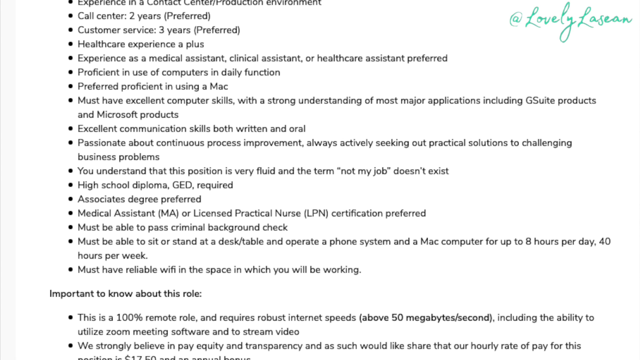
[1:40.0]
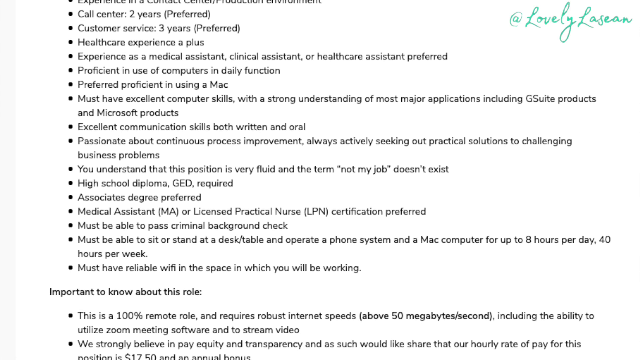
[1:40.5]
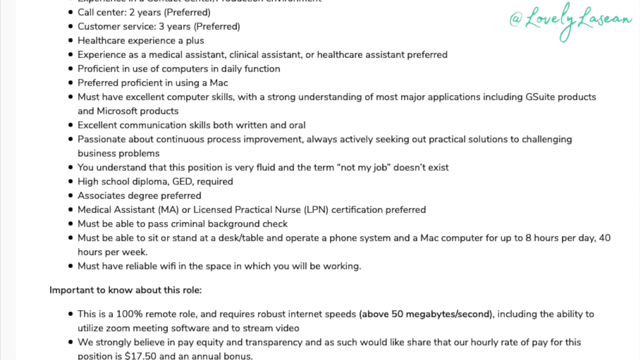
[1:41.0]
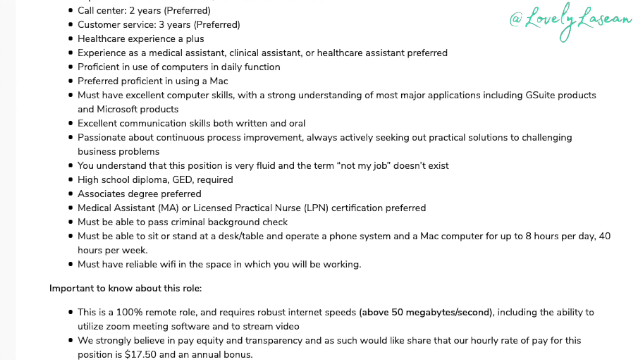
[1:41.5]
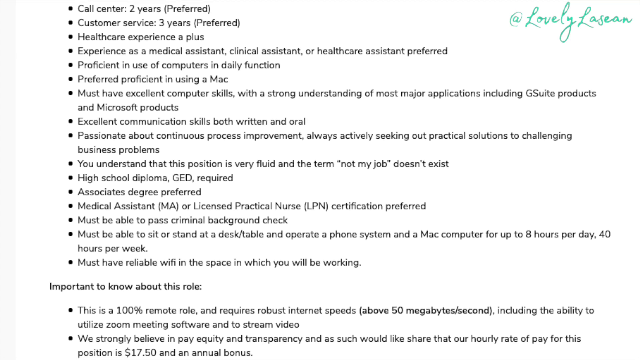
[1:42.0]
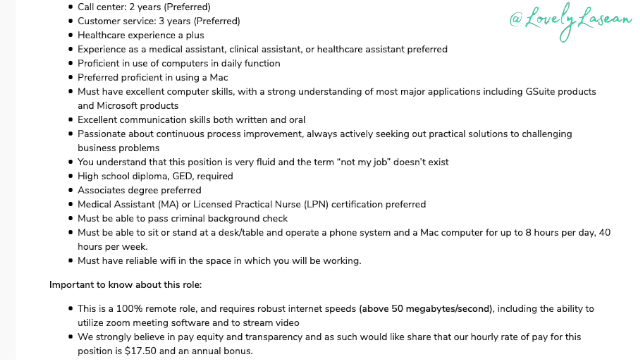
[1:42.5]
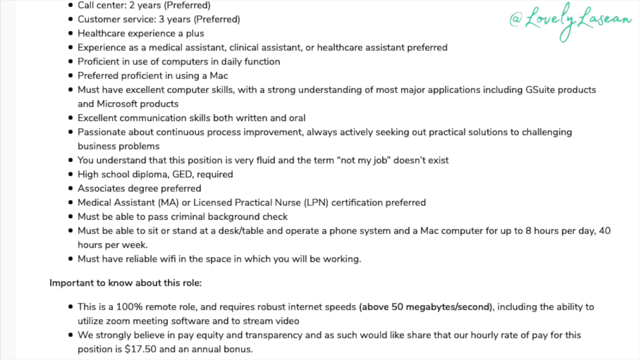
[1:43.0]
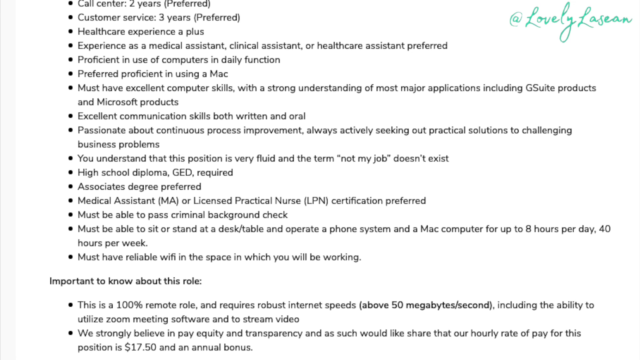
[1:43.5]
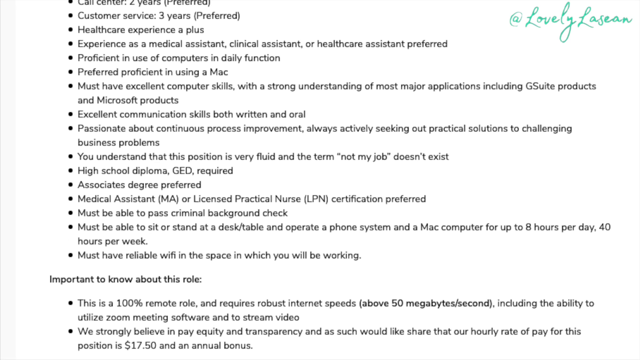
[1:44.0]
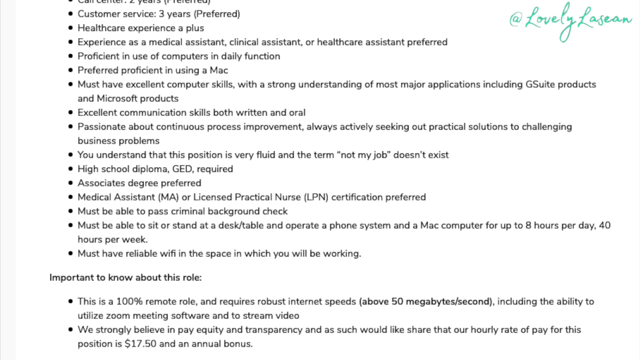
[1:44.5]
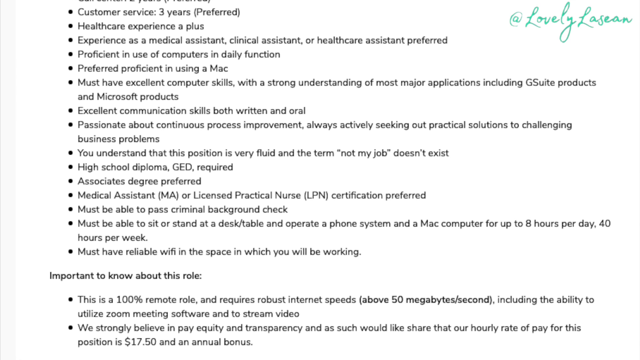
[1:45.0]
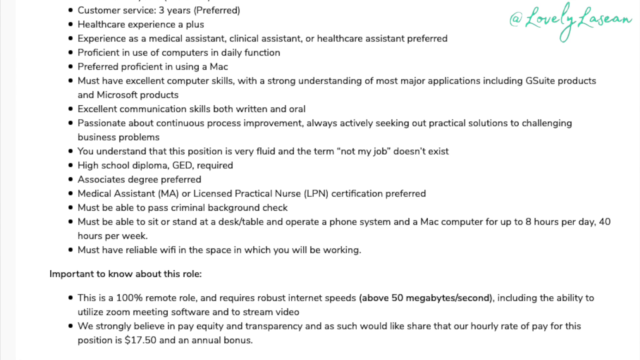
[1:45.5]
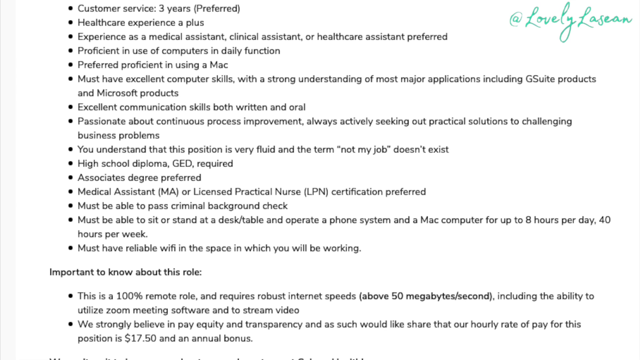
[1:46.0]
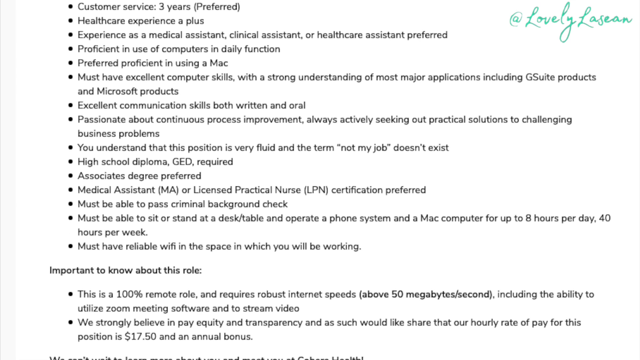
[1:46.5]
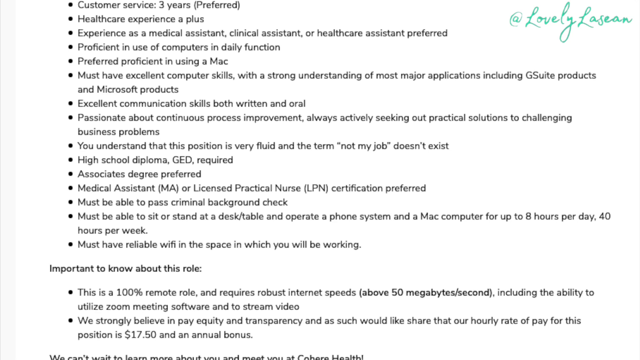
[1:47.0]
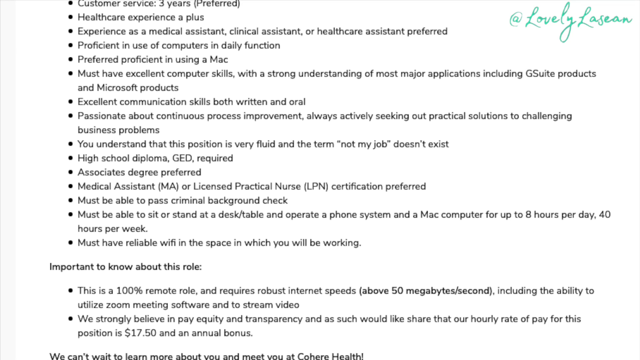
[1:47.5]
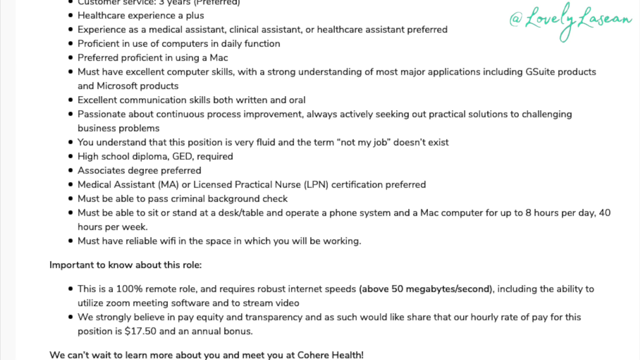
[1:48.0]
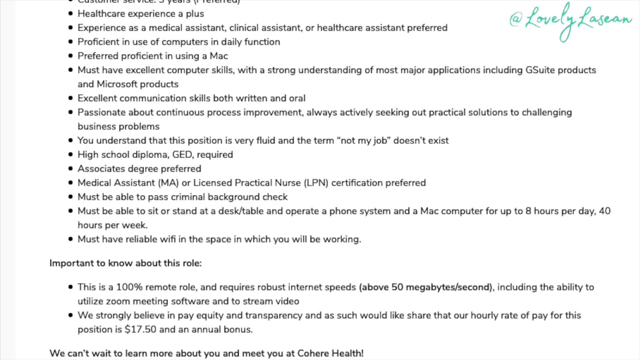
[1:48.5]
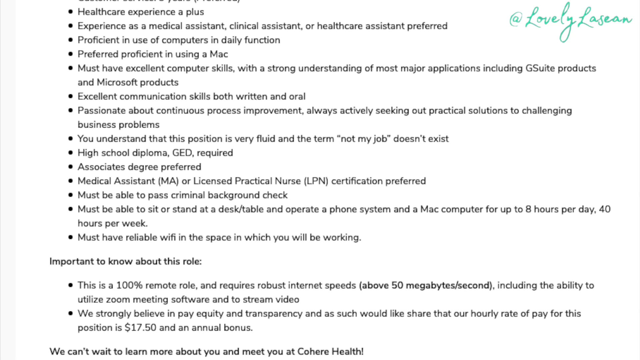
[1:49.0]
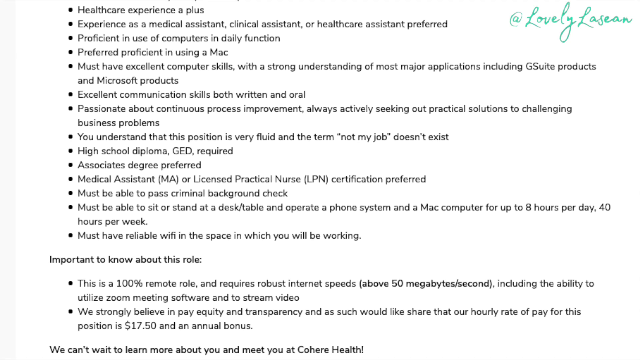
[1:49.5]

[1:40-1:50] A woman in three different dresses, with long brown hair, appears against a white background with green flowers at her side. She is advertising a skincare product, holding it; the product is for Cohere. A page with the Cohere website follows, mentioning in-tech specialists, apparently a search for a specialist to join the company. On the left side there is a button reading "apply here", highlighted in red, apparently for applying for the specialist position. The next page says "what will you do" and lists the things the specialist will do, followed by a section reading "your competencies" that lists the competencies expected of the applicant.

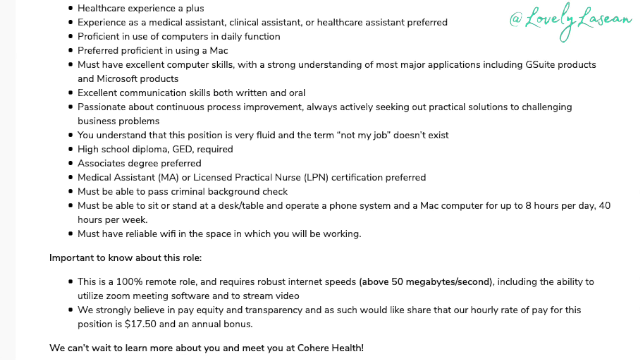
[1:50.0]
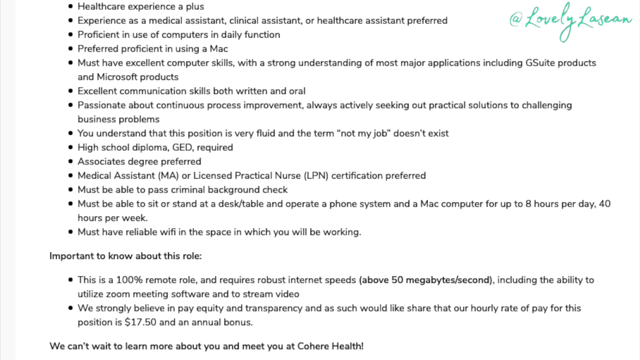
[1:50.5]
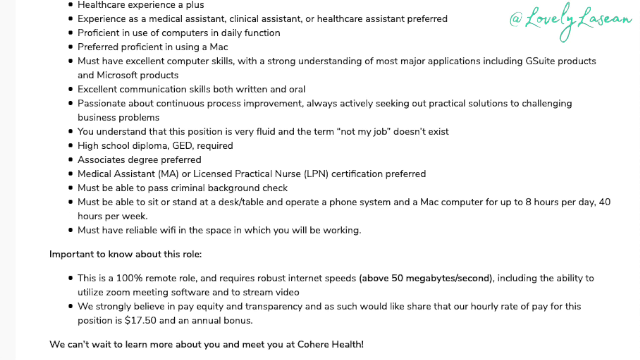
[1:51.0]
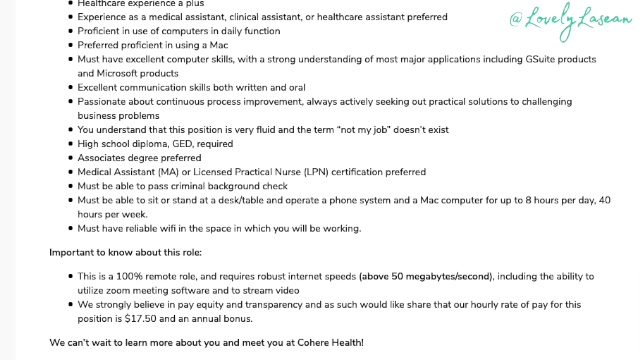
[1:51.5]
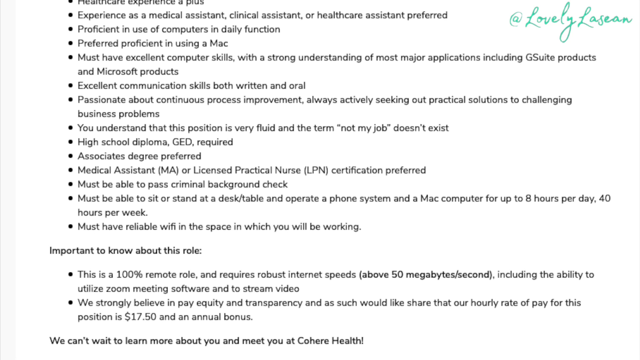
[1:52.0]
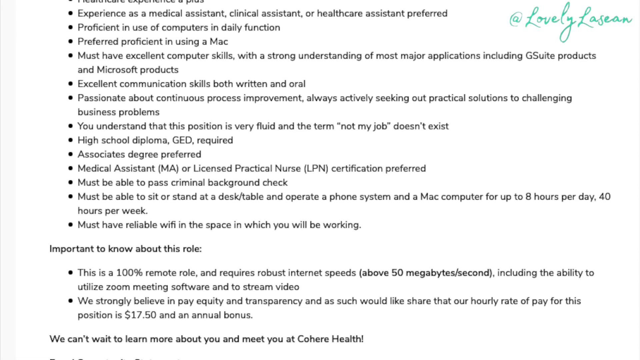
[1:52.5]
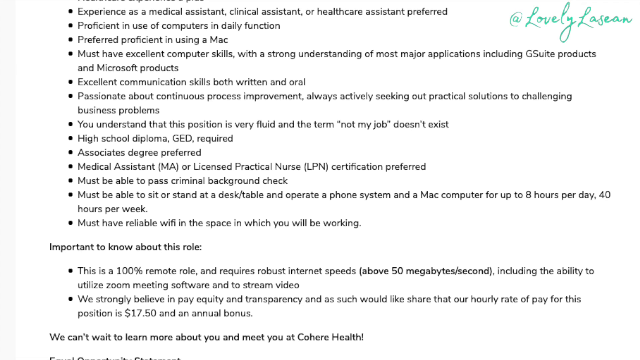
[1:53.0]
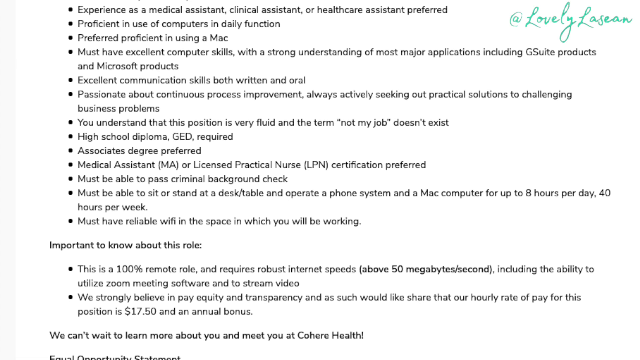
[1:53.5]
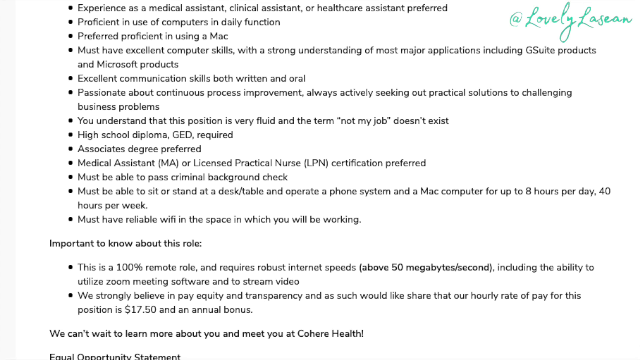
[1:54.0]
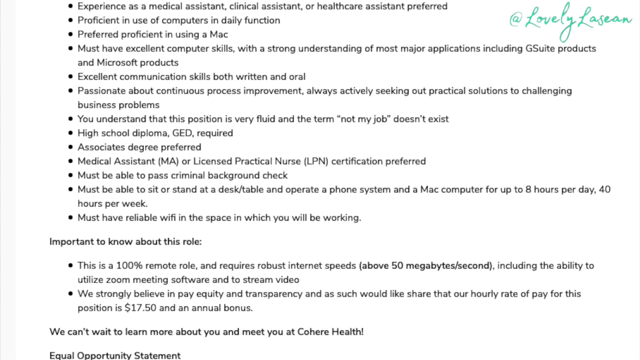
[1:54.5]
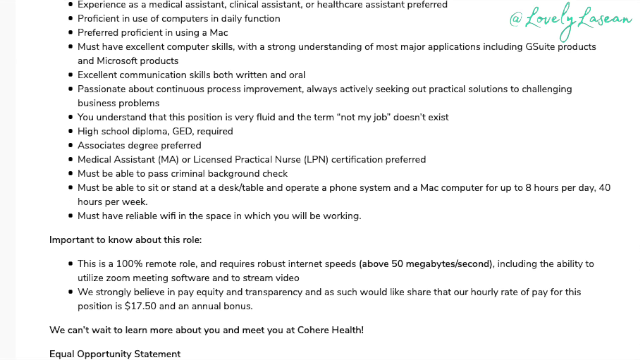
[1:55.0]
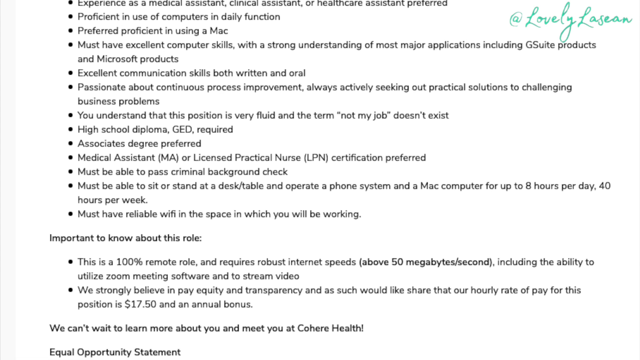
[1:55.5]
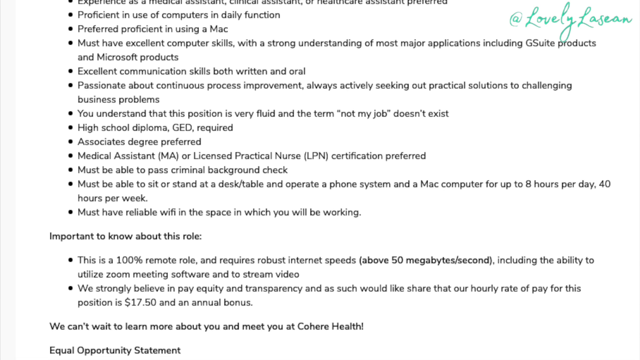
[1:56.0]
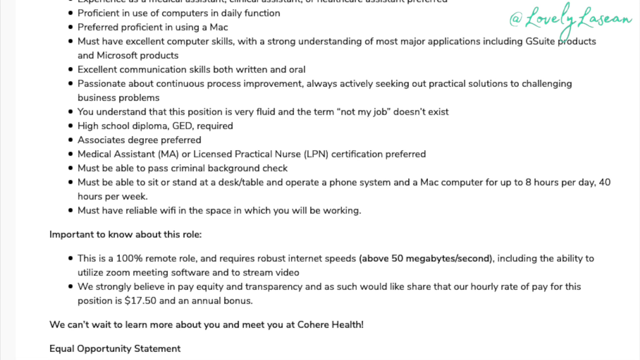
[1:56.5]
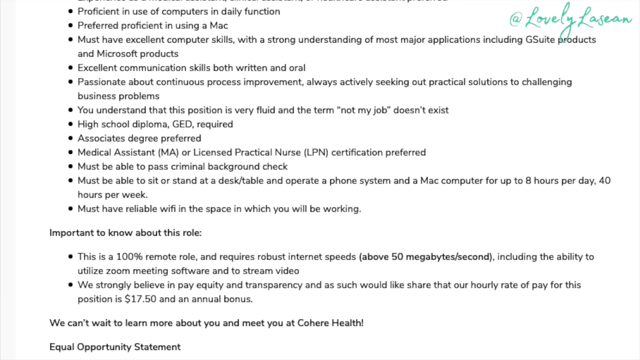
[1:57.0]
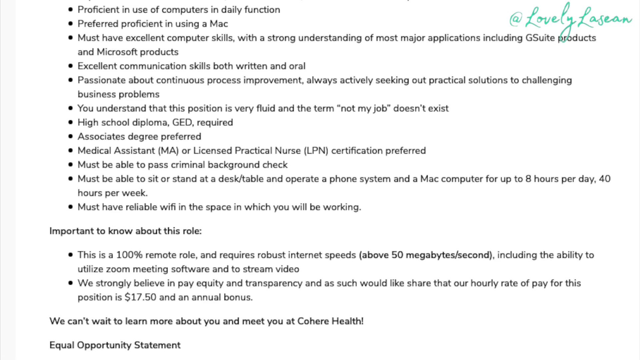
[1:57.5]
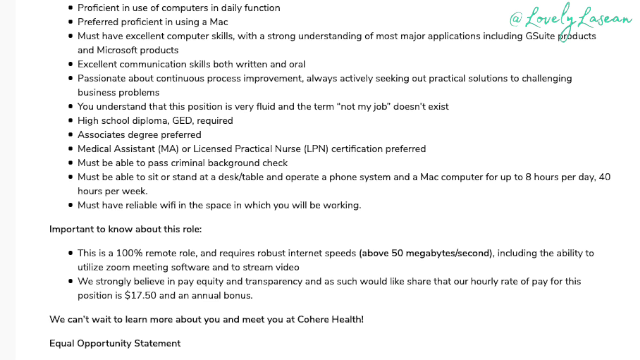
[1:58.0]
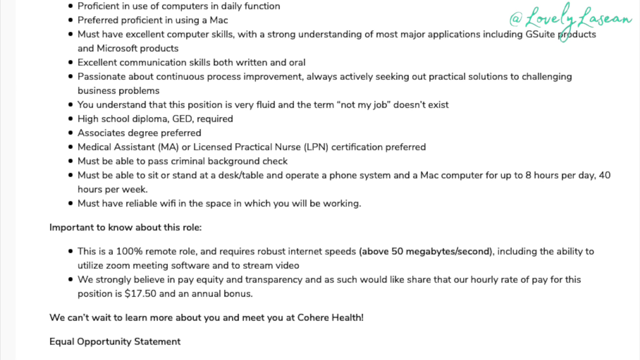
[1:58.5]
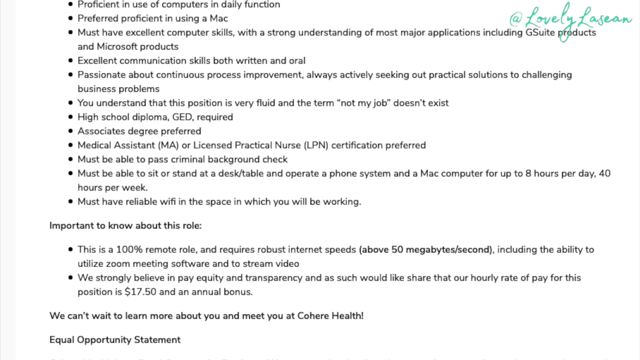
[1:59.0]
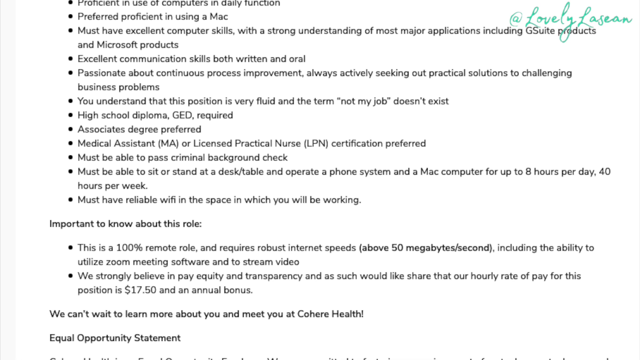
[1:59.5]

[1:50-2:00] At the start of the ad, a woman appears wearing three different dresses. She has brown skin, brown hair and long silver earrings, and a tattoo on her right shoulder. She lifts a small bottle of the product she is advertising and talks while holding it. The next page is a website, apparently looking for a specialist to join the company. It shows a company overview with text beneath it, then an opportunity overview with more text. On the left side there is a red button reading "apply now", apparently for applying for a position. The next page reads "what will you do" and lists the tasks, followed by a section titled "your competencies" describing the competencies they are looking for.